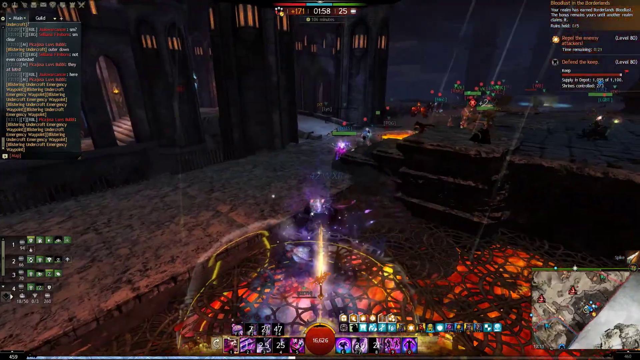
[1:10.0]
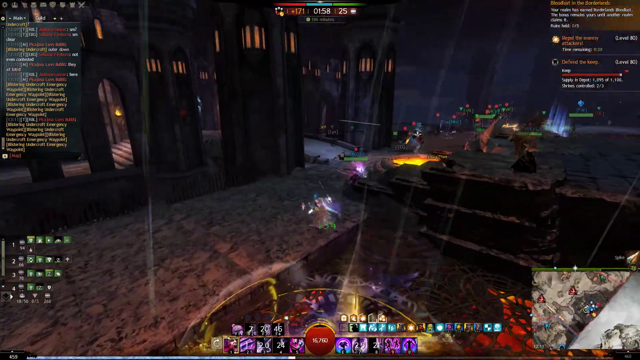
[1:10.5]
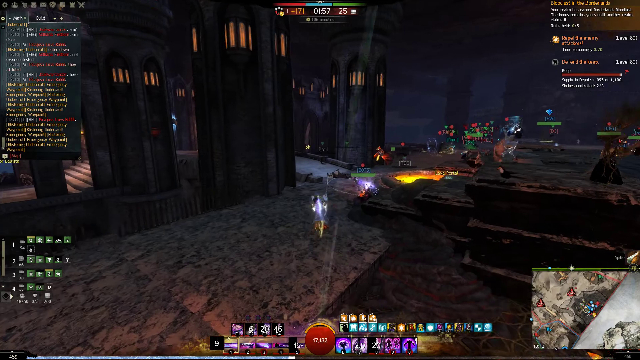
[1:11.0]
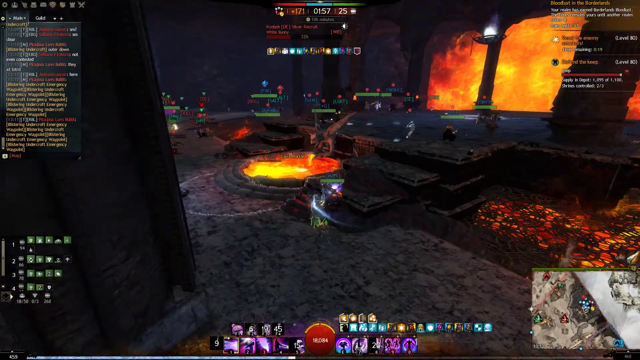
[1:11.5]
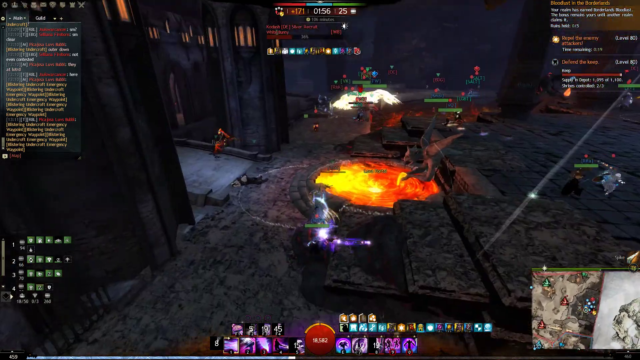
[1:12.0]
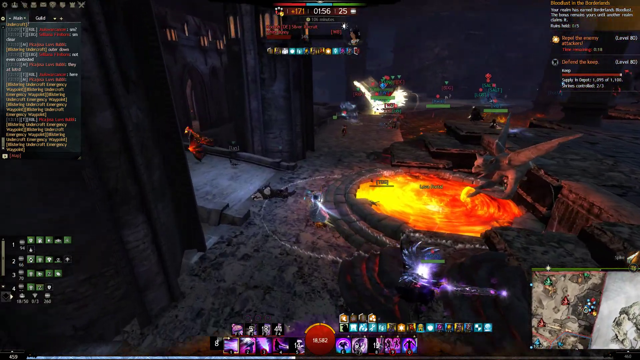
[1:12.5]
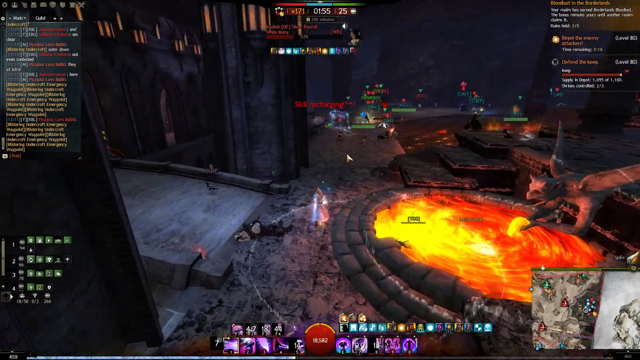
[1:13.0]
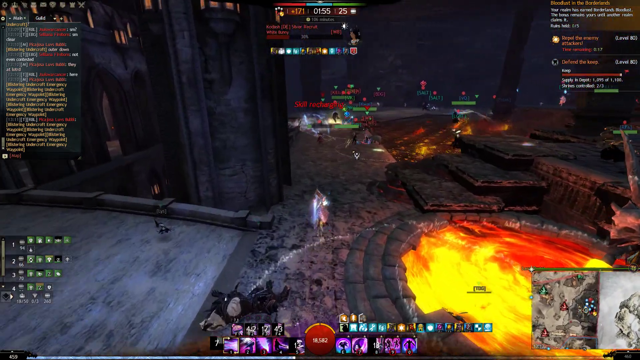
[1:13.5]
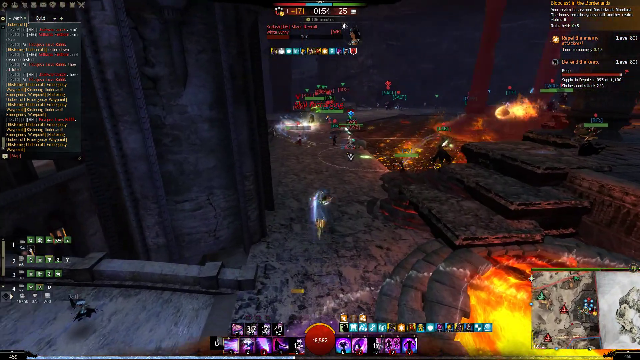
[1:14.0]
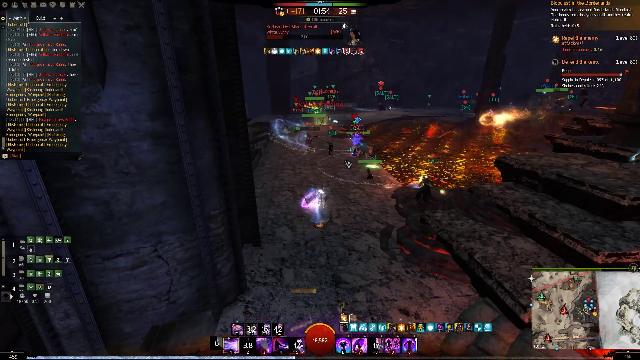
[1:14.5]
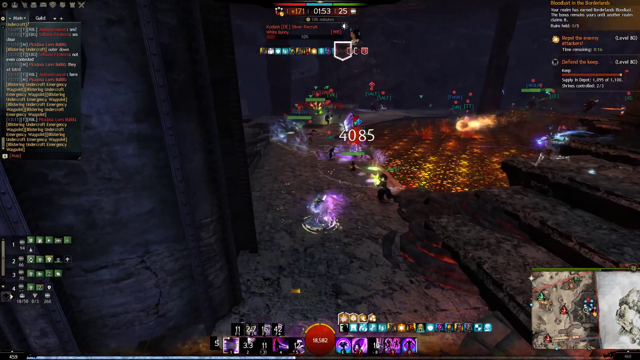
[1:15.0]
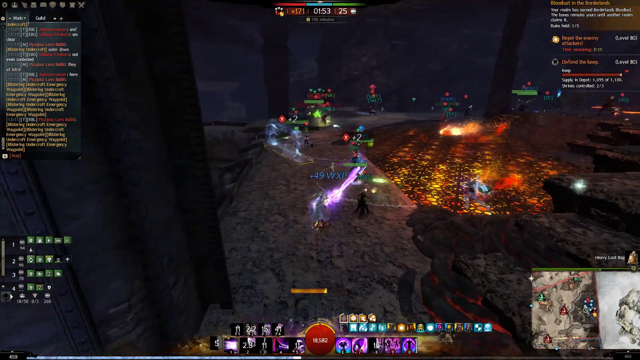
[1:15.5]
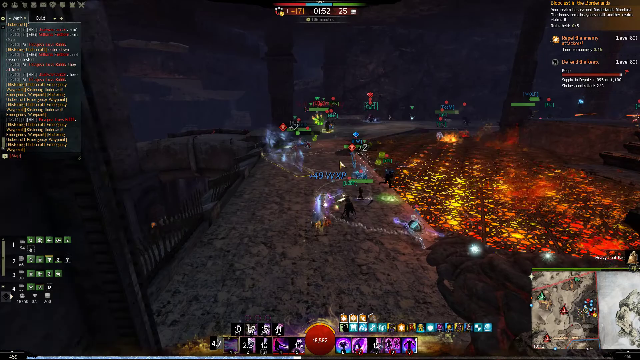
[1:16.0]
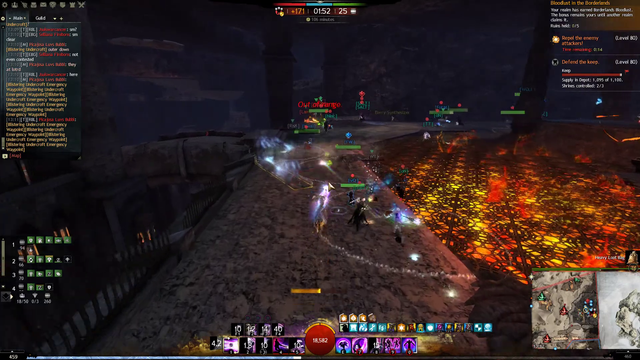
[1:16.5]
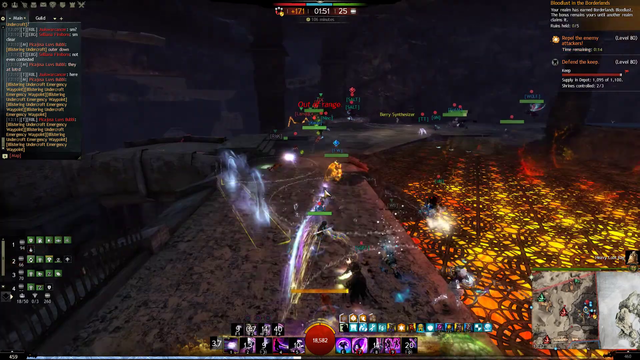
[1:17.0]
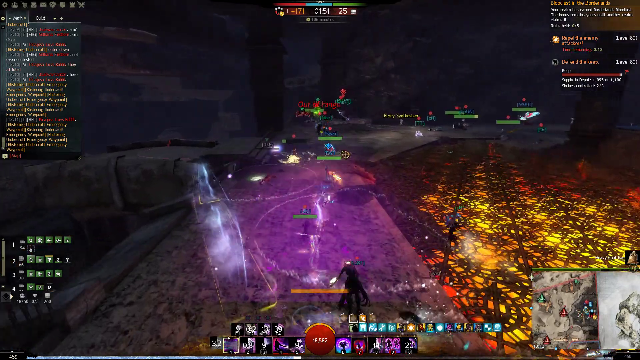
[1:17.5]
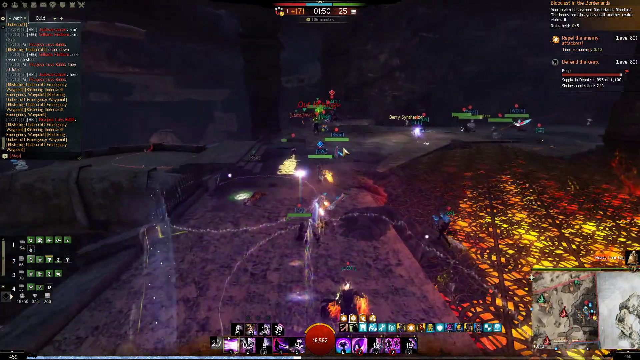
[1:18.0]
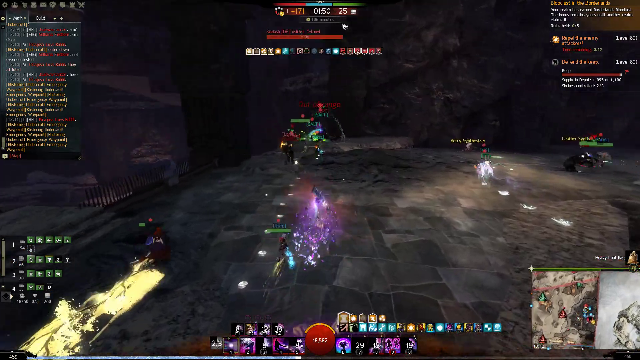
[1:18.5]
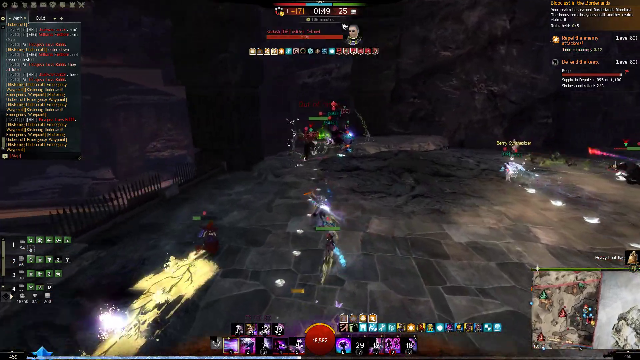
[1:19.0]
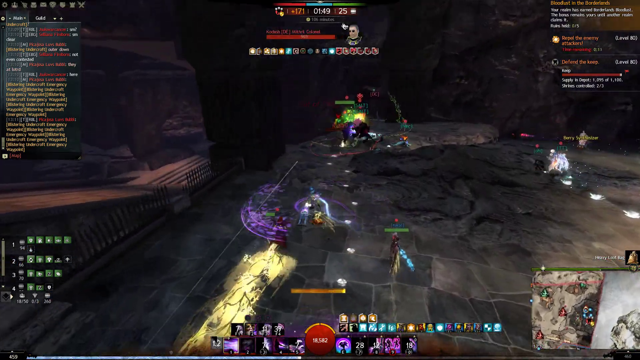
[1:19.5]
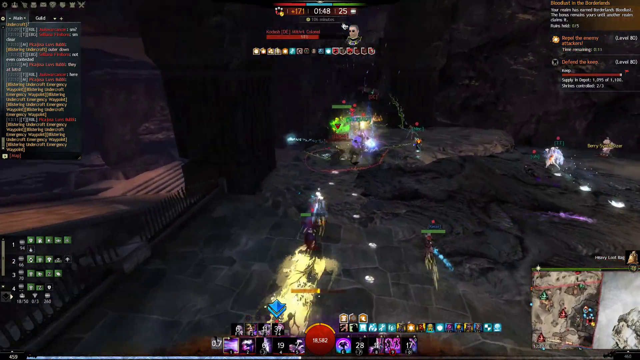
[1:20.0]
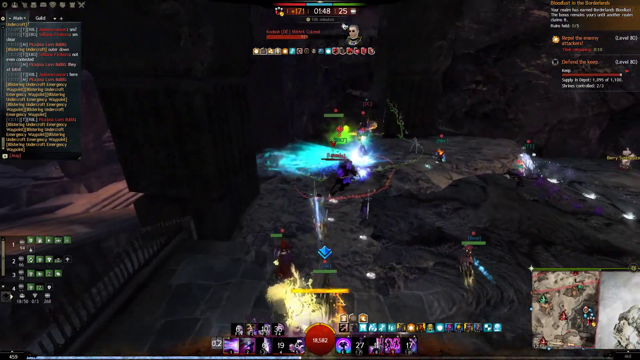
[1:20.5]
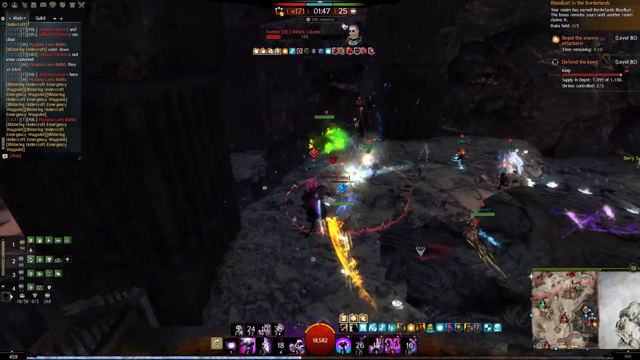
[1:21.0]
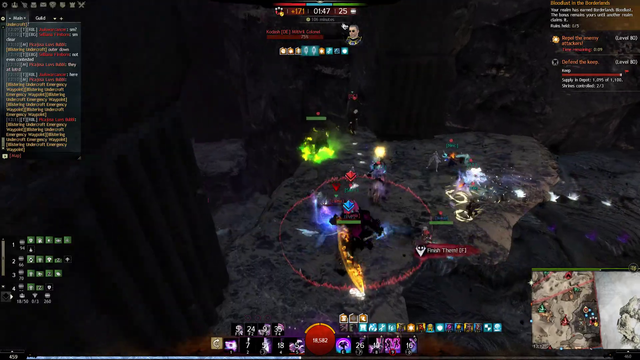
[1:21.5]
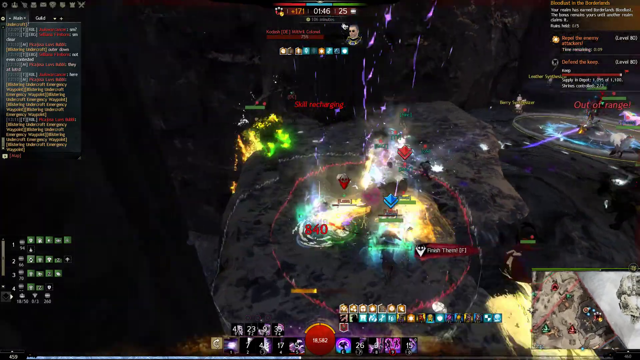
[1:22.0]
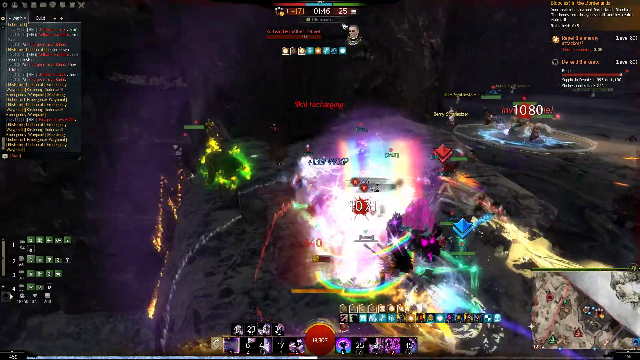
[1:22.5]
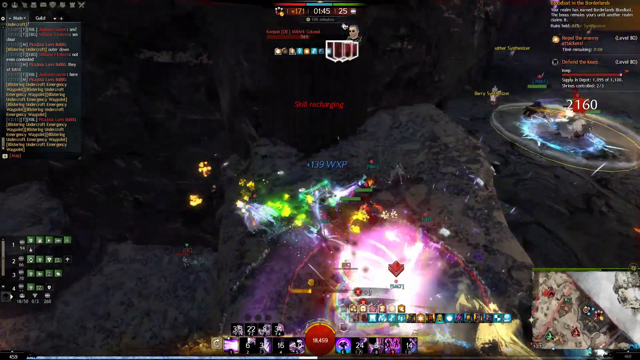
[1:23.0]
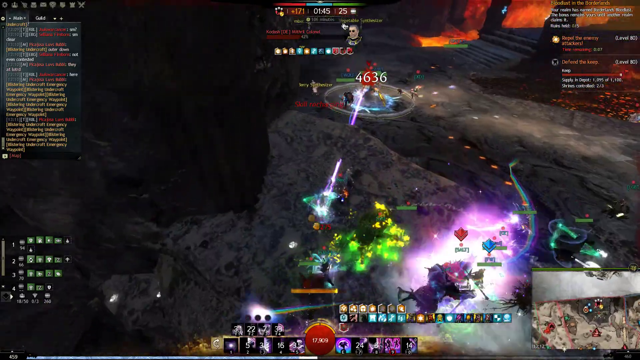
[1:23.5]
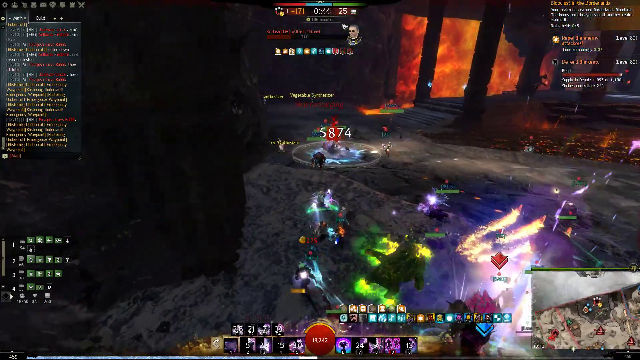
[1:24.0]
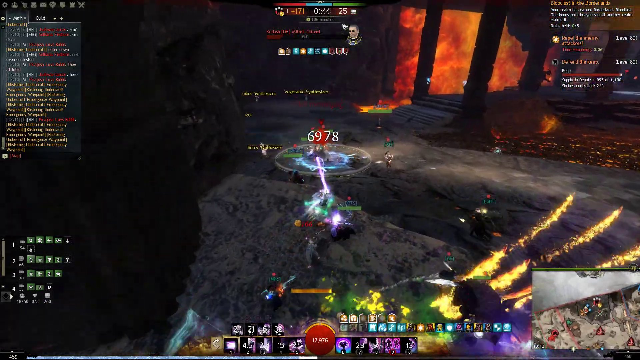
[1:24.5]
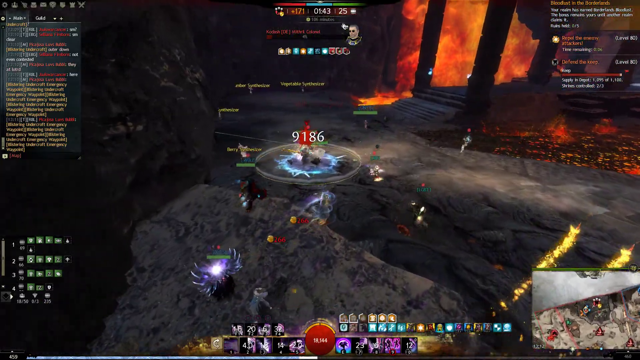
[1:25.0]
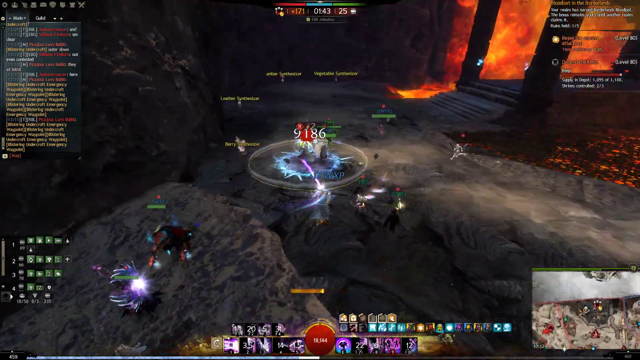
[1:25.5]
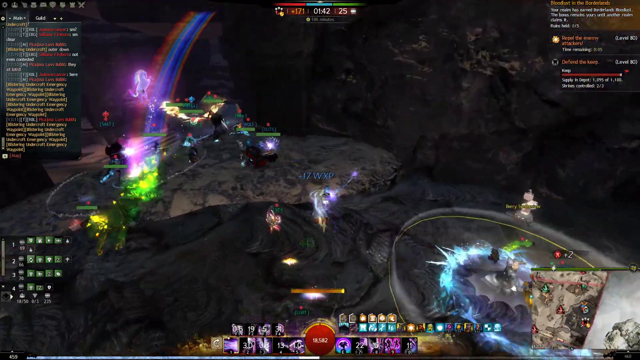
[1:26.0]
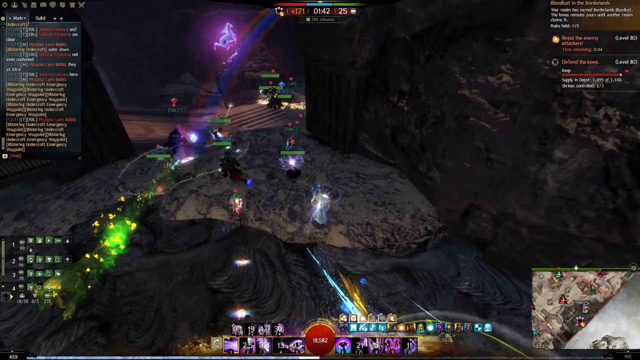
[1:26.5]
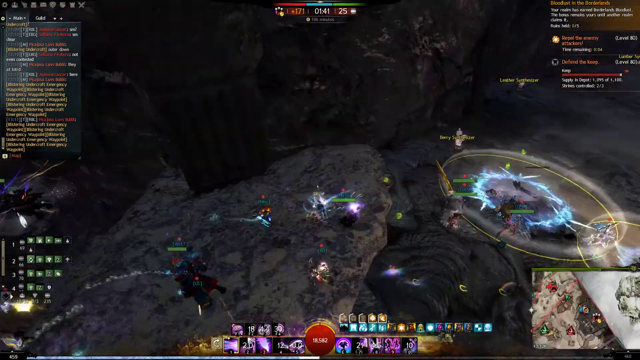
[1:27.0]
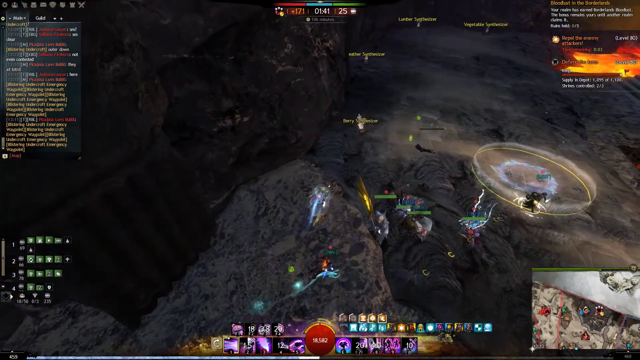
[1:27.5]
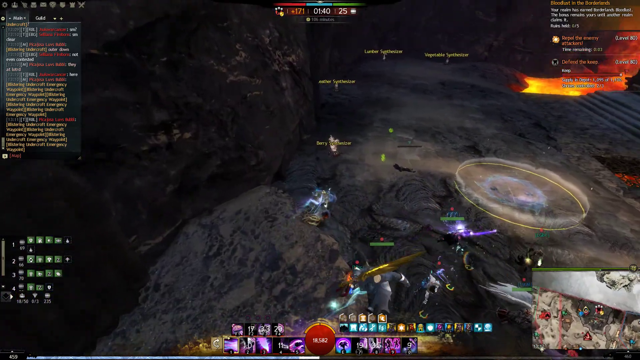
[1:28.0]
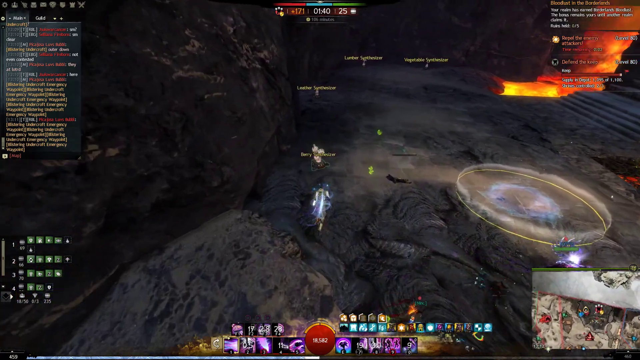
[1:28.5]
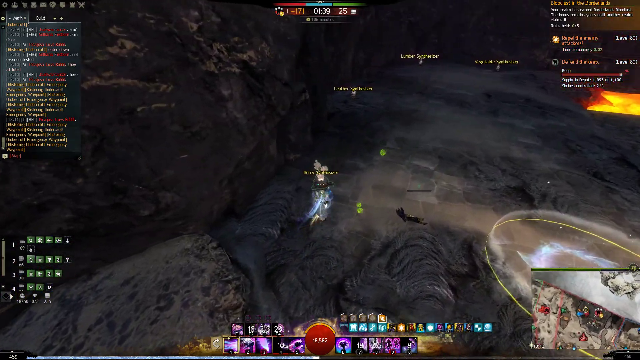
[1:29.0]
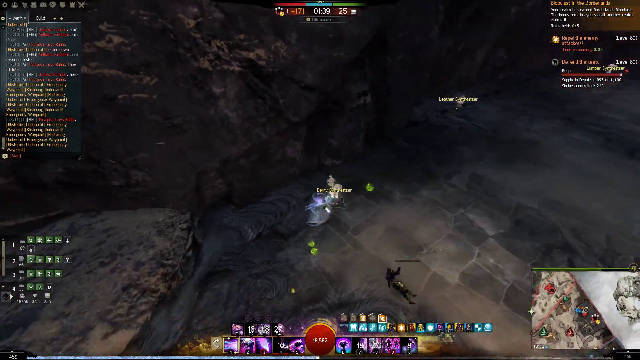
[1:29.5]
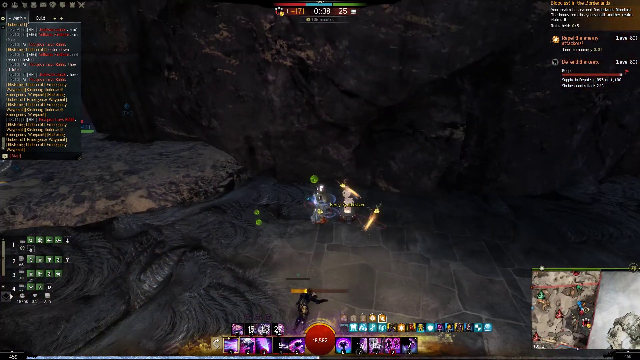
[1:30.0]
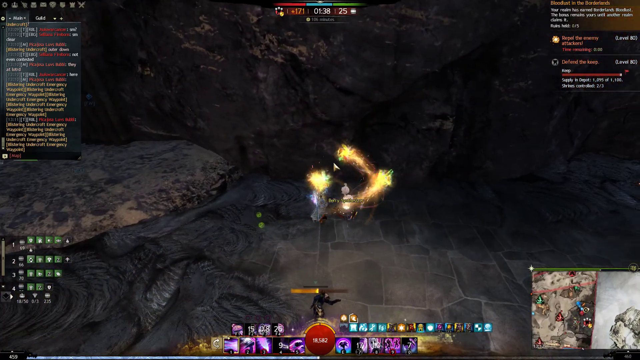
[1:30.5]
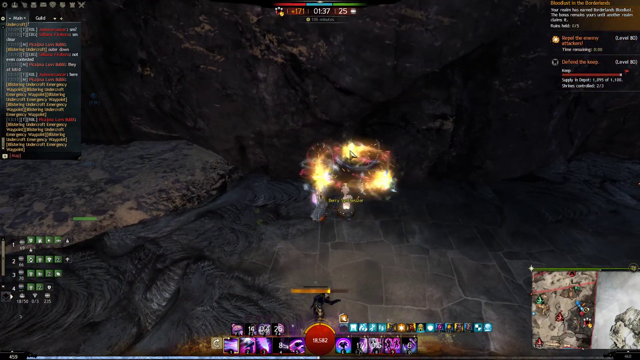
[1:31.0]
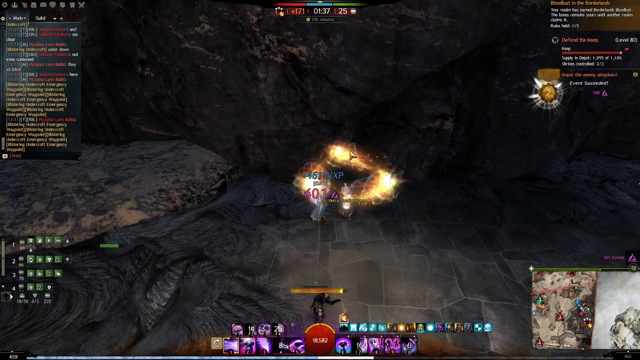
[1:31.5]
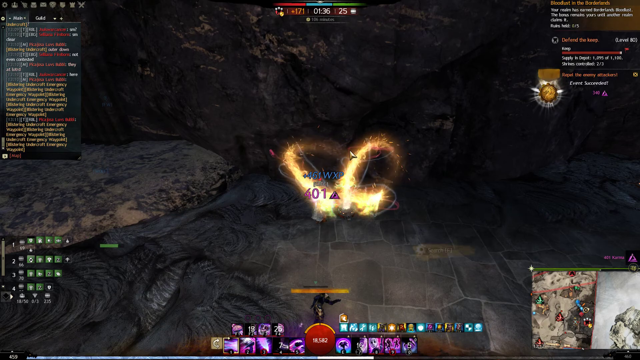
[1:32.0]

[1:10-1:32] Several players are in the game at the same time, apparently a multiplayer adventure game. The players run into opponents that are not powerful enough to stop them; they easily defeat the opponents and keep advancing further into the game. The setting appears to be a large castle, possibly the dungeon part of the castle, though it could also be its upper floors. In the upper left corner of the screen a chat window is scrolling as the players chat with each other. A game map is in the lower right corner.